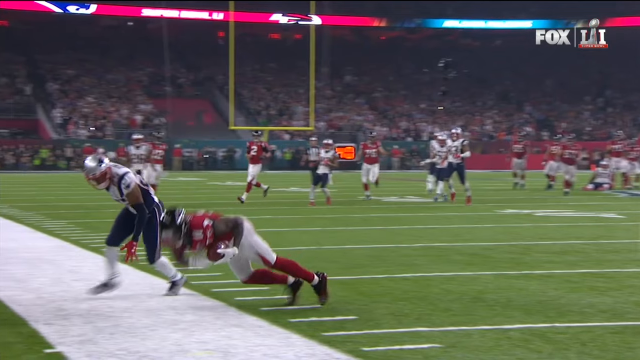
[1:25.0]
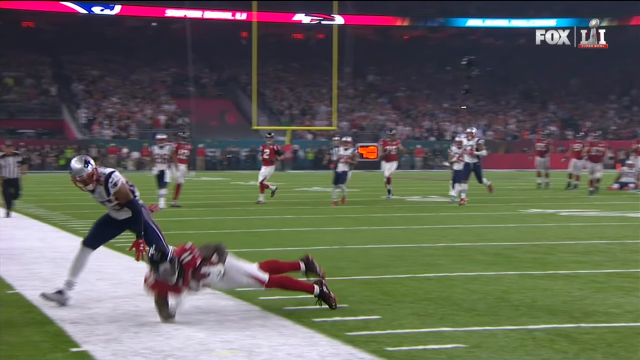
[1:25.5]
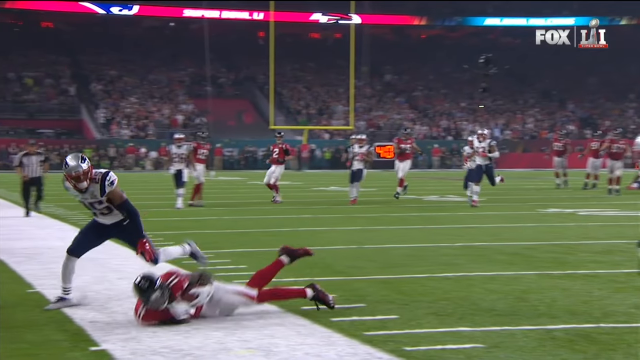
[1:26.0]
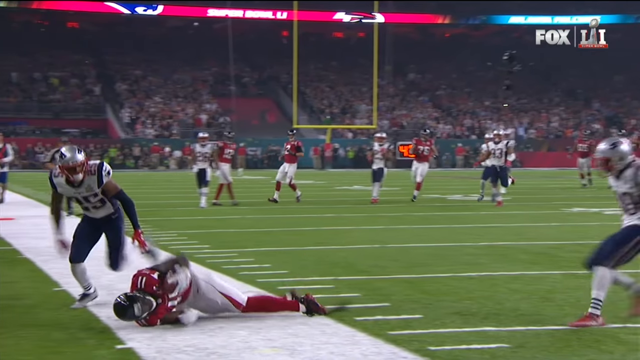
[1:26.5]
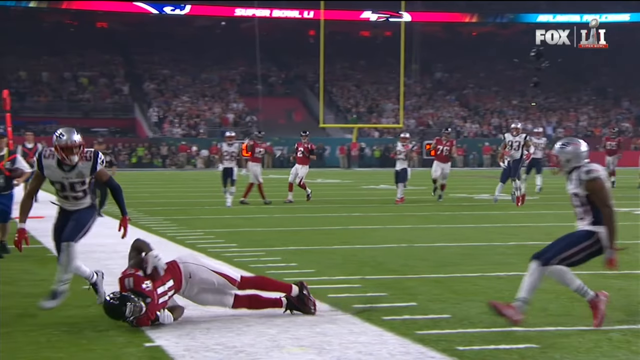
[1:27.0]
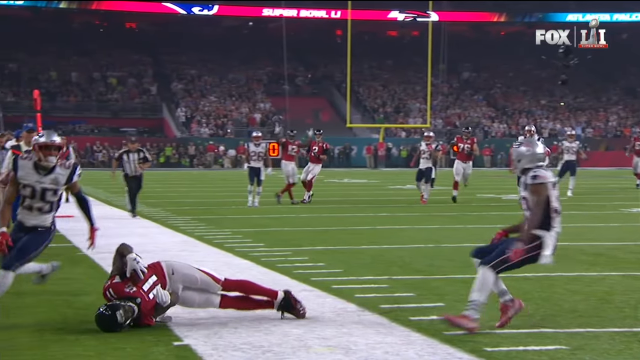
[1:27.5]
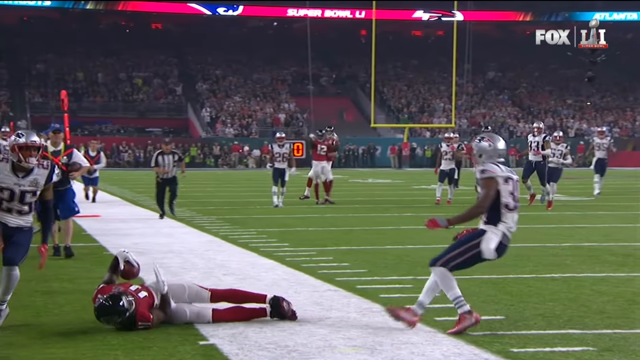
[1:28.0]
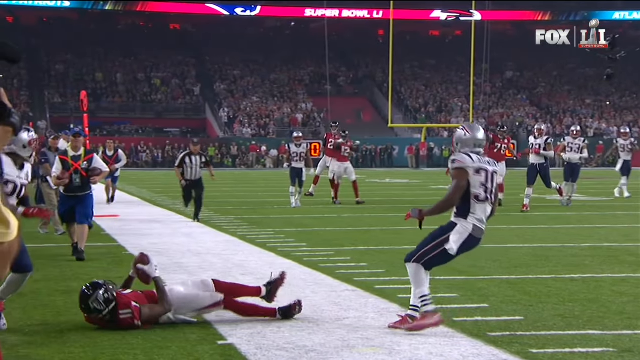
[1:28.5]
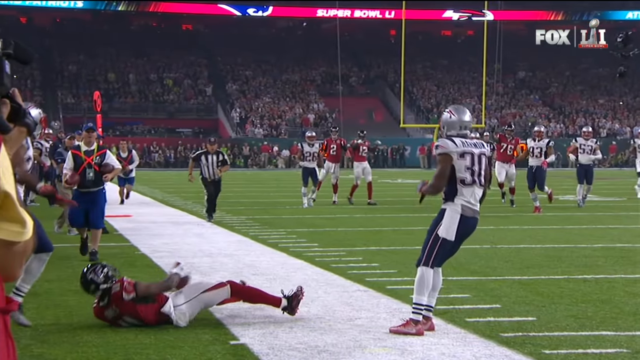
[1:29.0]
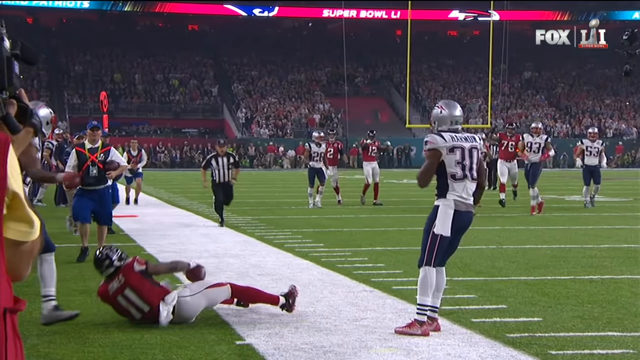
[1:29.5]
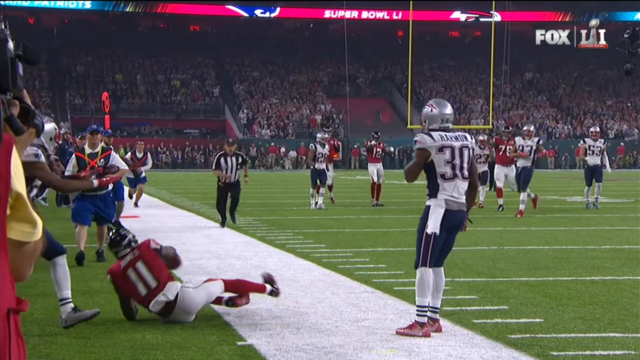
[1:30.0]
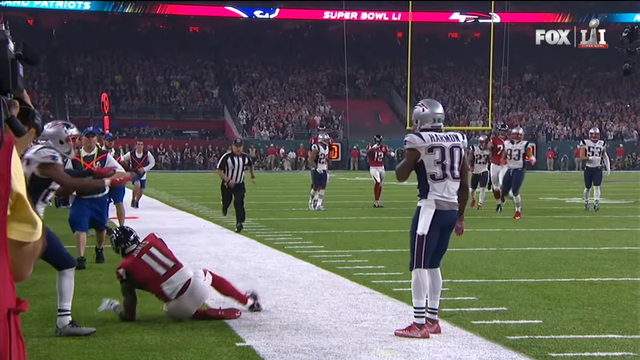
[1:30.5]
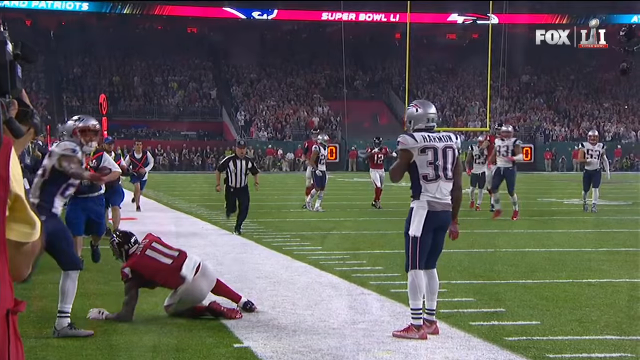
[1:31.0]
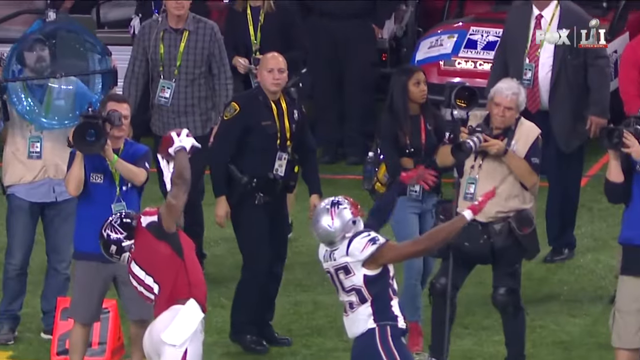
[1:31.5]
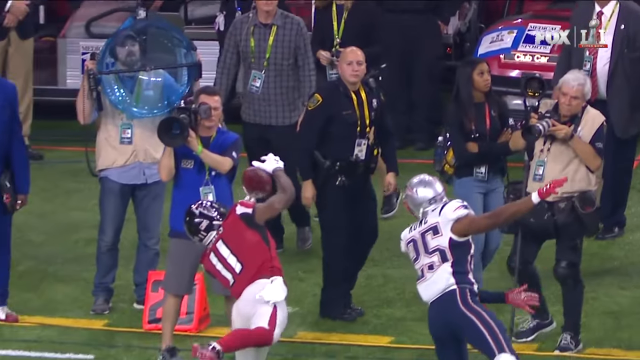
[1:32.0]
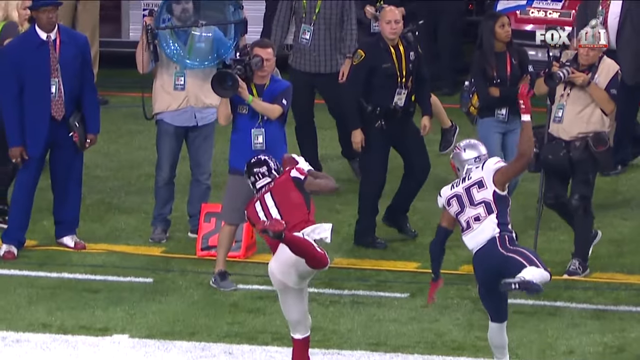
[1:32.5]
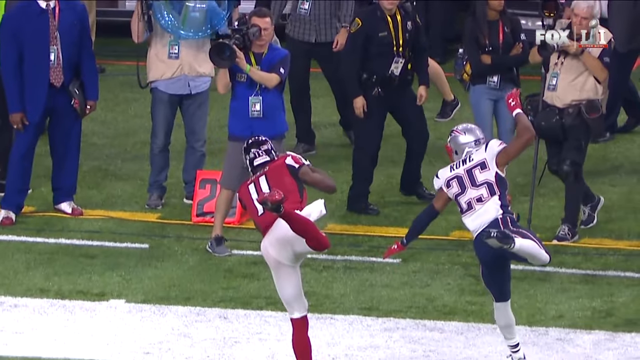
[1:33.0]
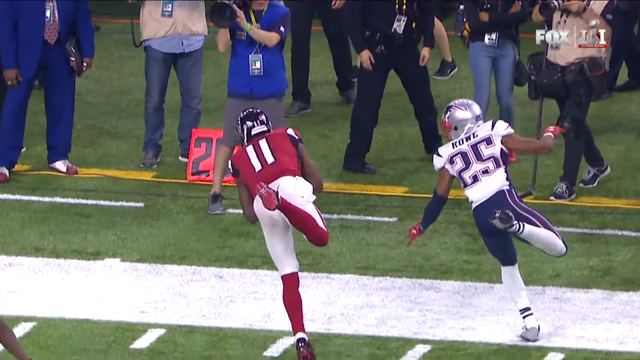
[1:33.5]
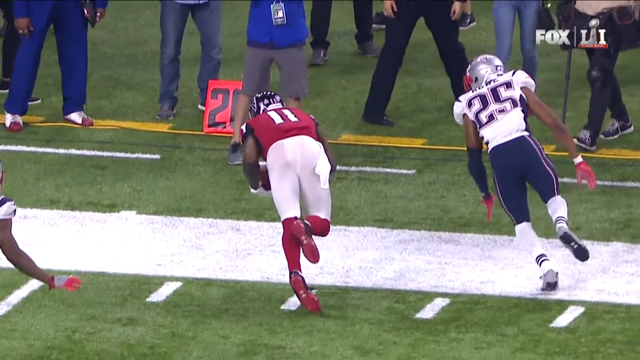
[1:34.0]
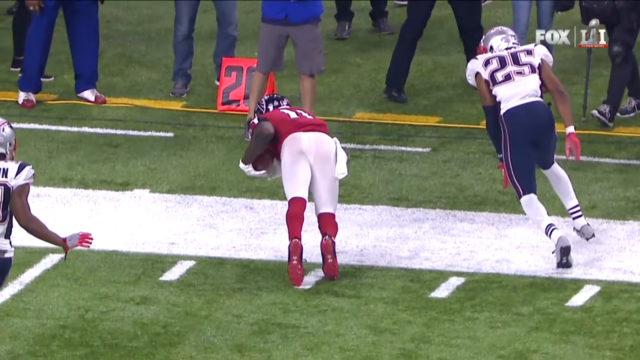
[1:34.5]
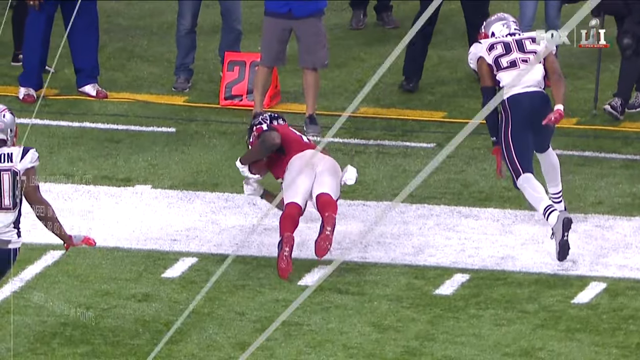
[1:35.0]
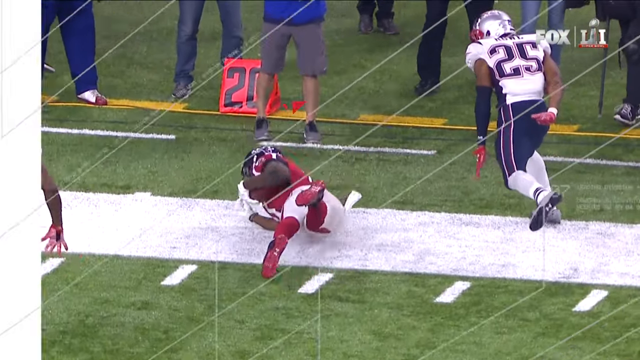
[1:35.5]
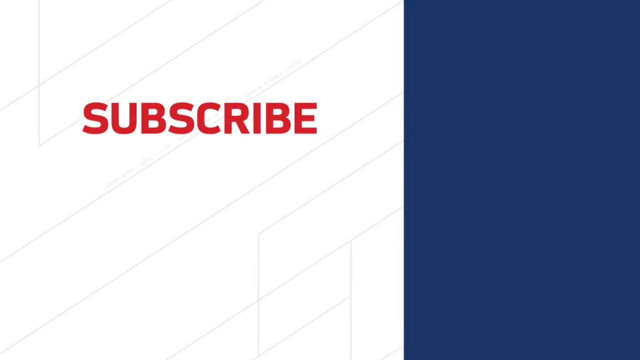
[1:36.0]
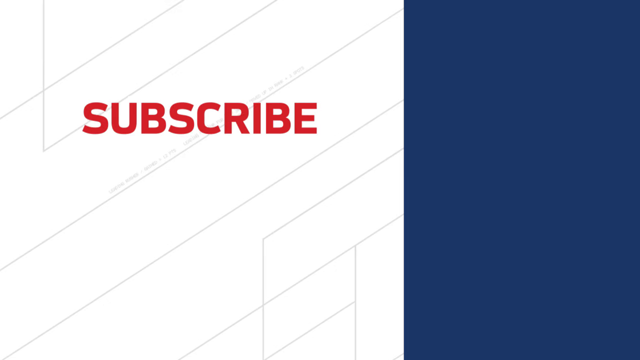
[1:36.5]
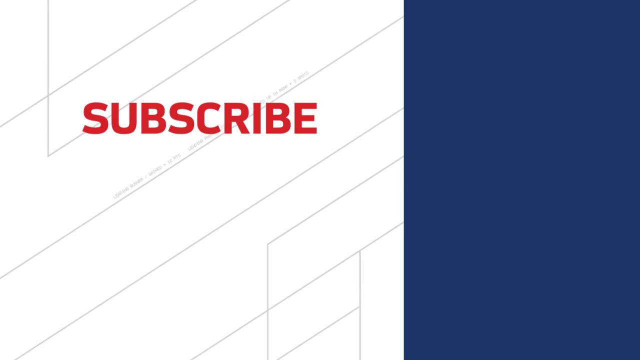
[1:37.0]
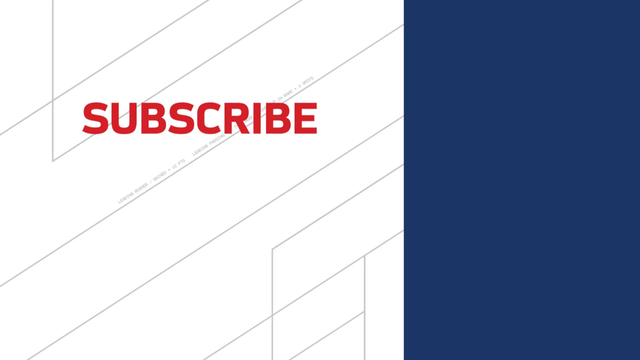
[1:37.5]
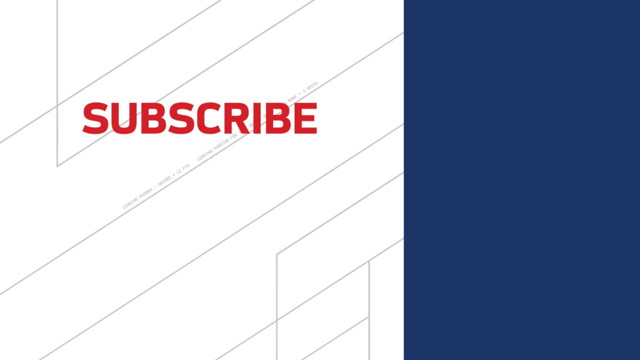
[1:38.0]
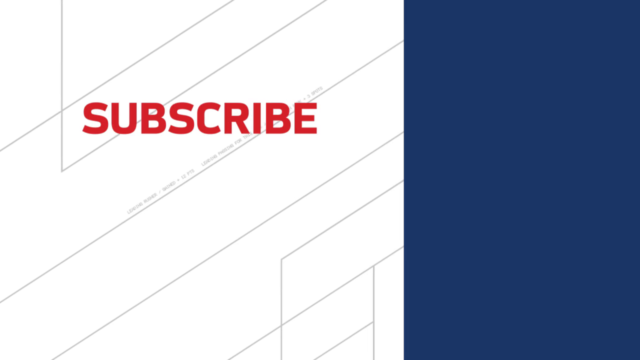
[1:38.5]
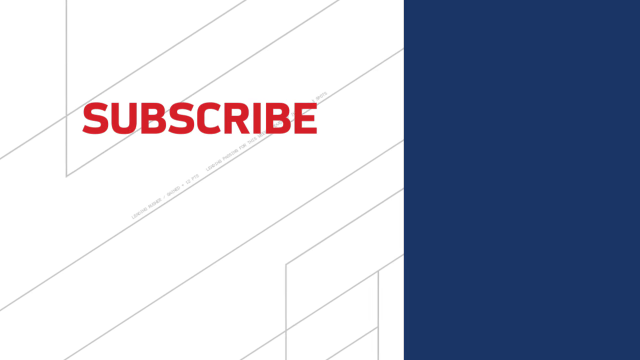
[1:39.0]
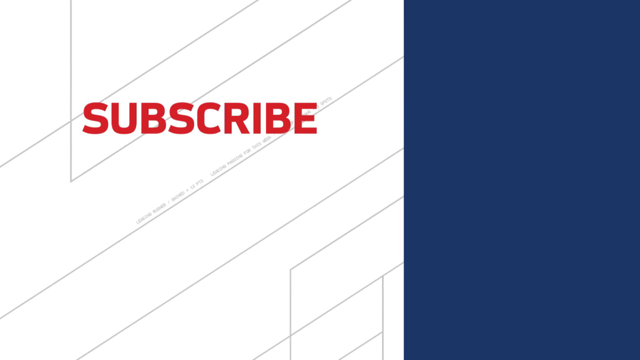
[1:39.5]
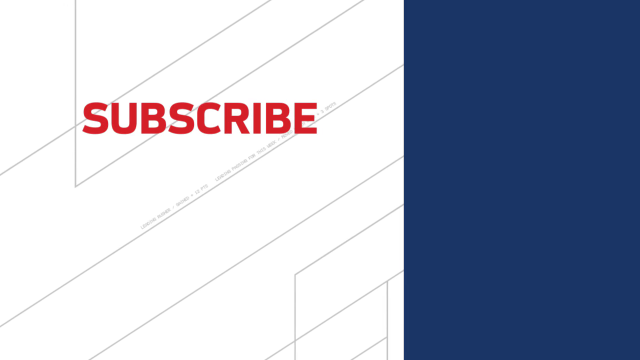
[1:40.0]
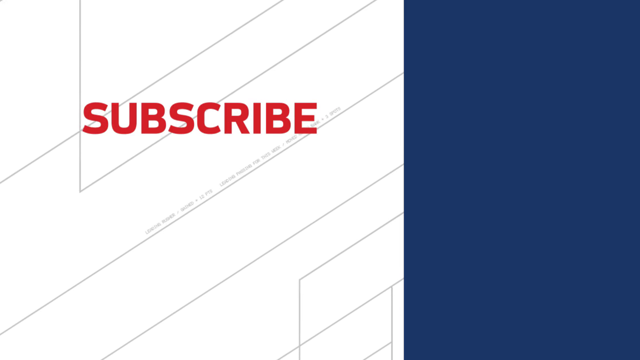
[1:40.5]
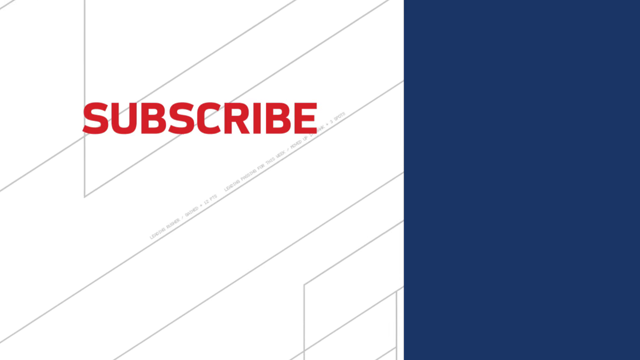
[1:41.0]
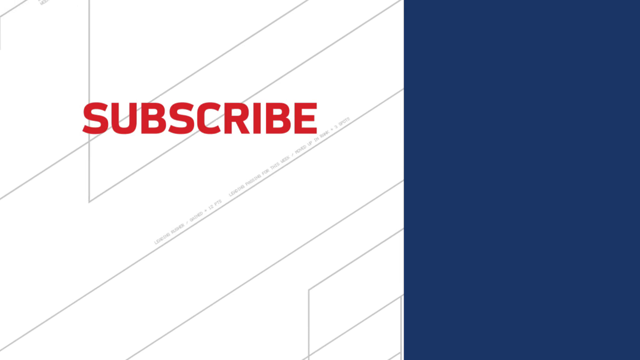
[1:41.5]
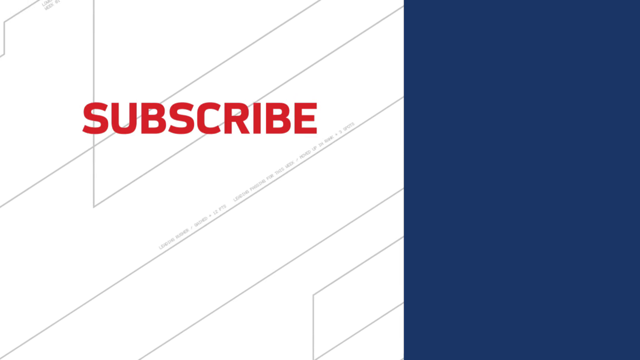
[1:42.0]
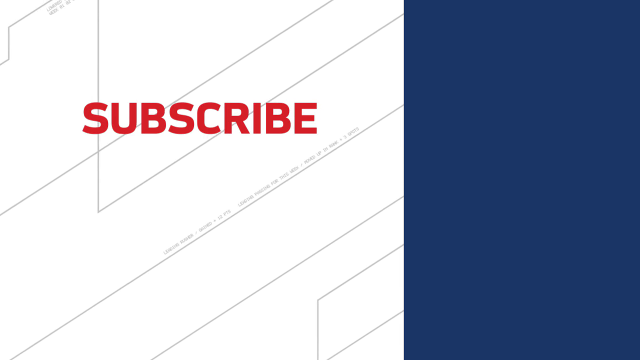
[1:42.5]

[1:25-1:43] Julio Jones, number 11 on the Atlanta Falcons, falls on the sideline as another Patriots player, number 30, comes rushing in, and in slow motion a referee runs down the field. Another replay from a back angle shows Julio Jones with one foot in the air and one leg down right before the sideline; he then gets the other leg down before falling out of bounds. The video closes with an NFL logo with "subscribe" in red text above it. The background is white with thin diagonal gray lines on the left, while the right side of the background is a very dark blue. The left side of the screen with the lines slowly moves downward.